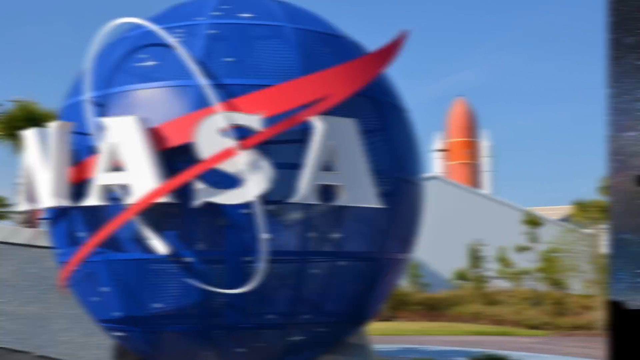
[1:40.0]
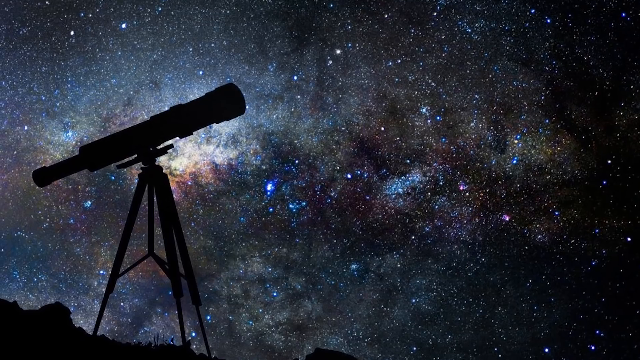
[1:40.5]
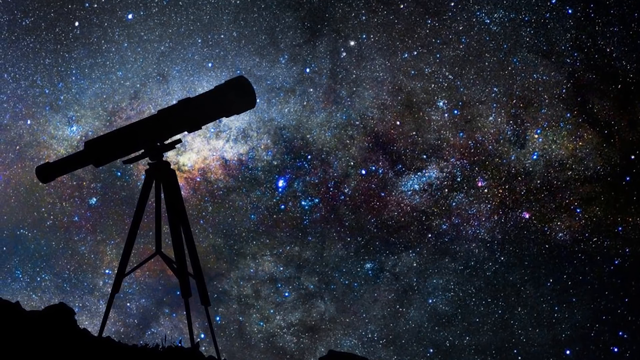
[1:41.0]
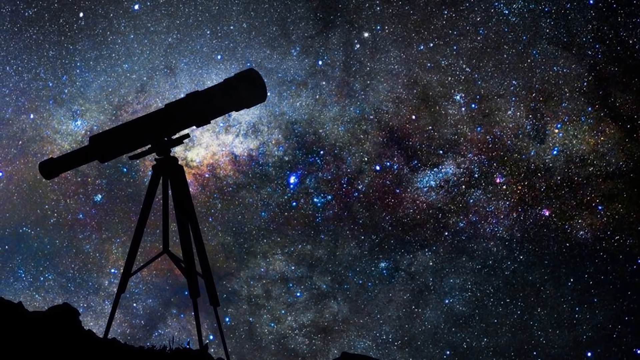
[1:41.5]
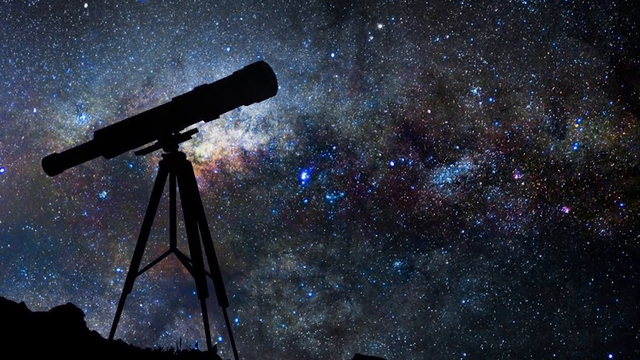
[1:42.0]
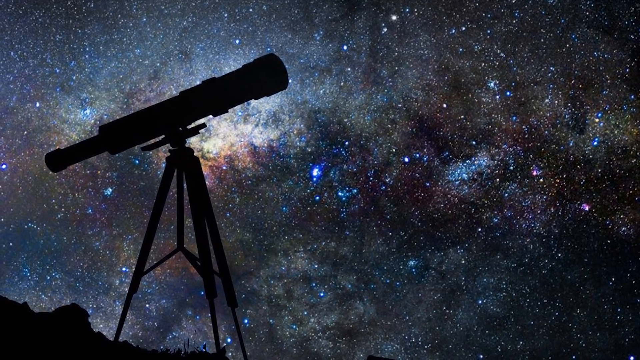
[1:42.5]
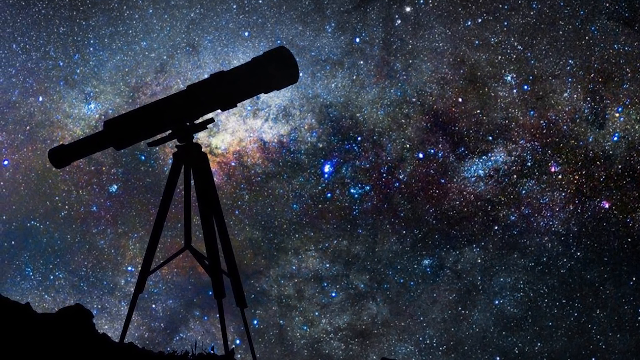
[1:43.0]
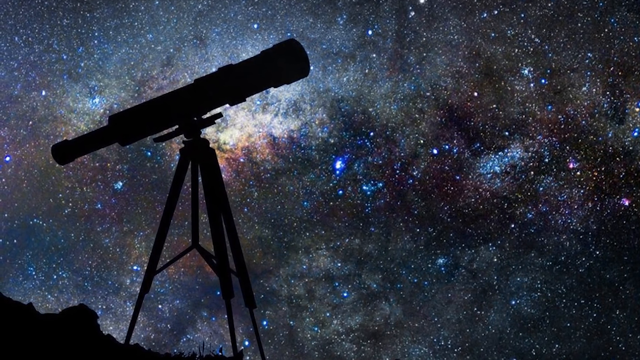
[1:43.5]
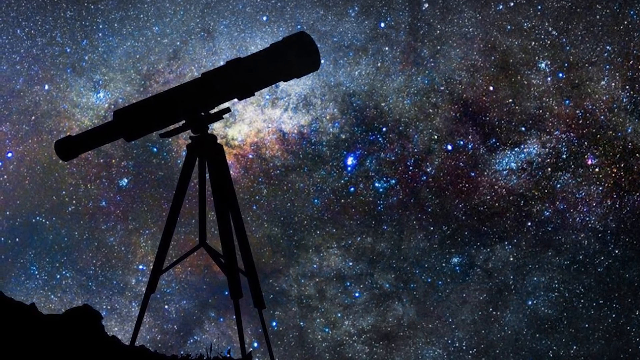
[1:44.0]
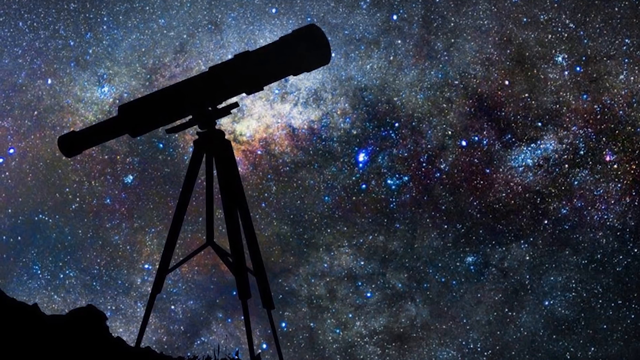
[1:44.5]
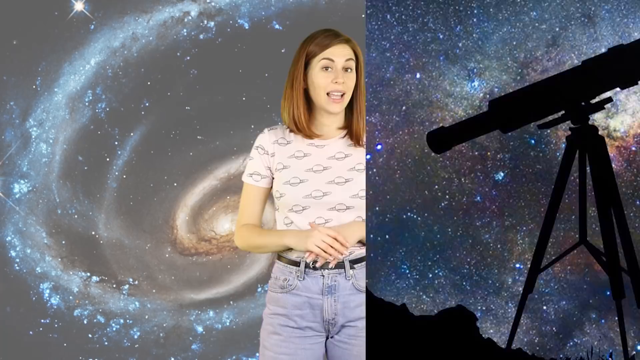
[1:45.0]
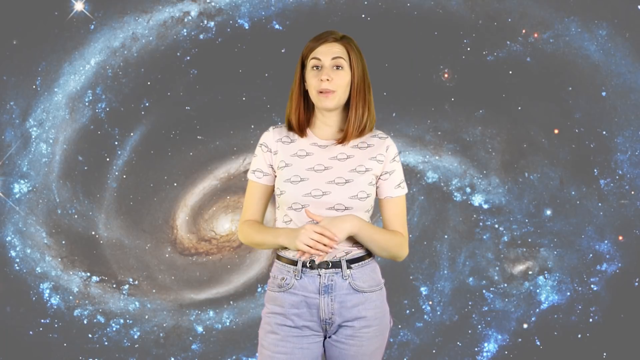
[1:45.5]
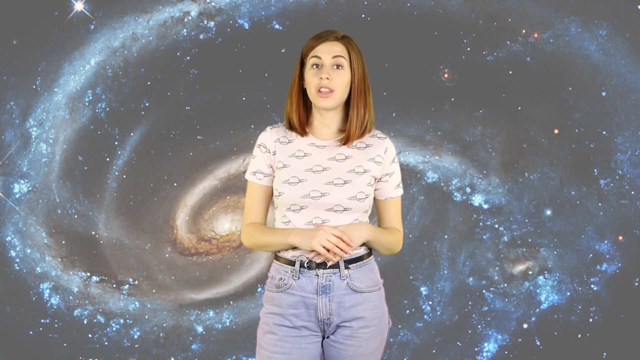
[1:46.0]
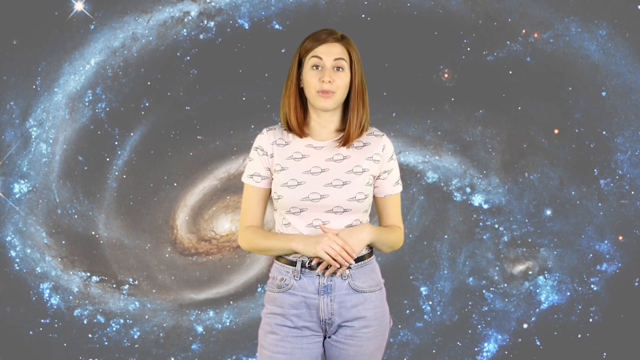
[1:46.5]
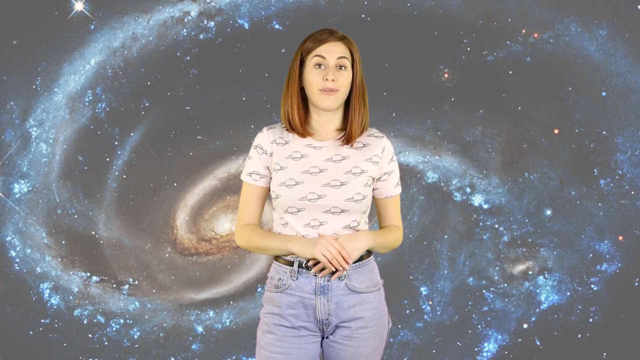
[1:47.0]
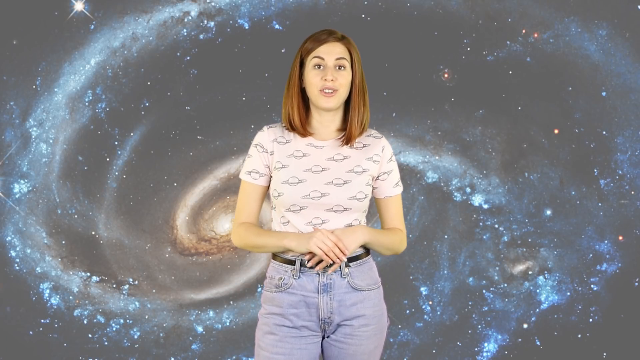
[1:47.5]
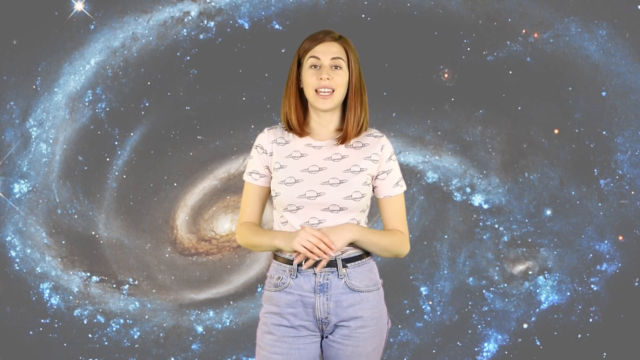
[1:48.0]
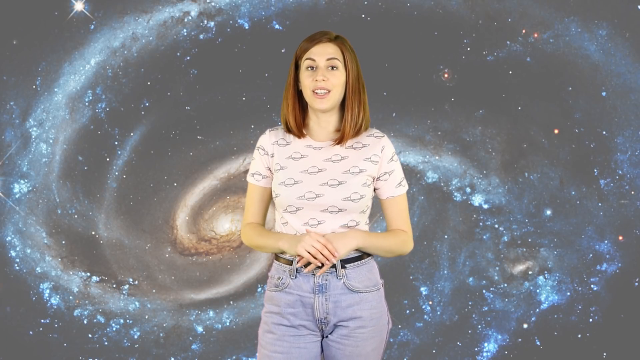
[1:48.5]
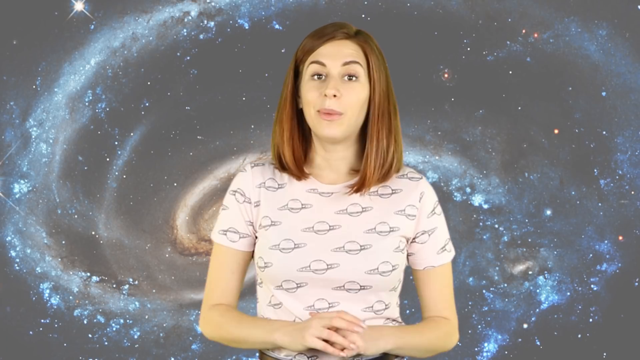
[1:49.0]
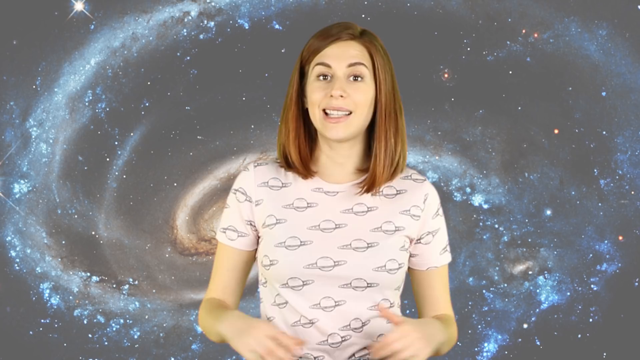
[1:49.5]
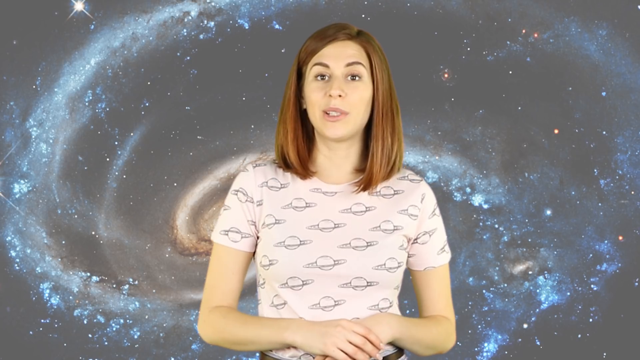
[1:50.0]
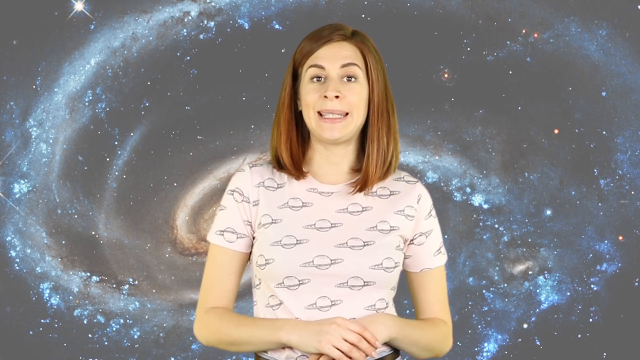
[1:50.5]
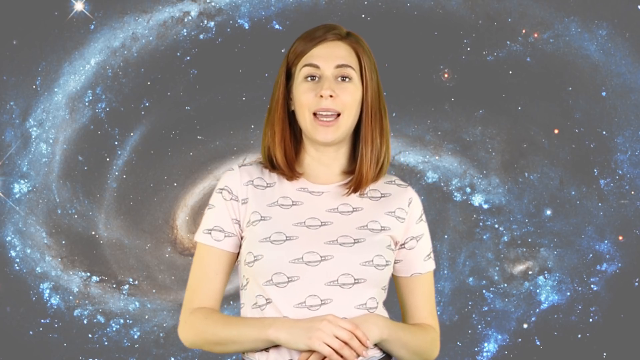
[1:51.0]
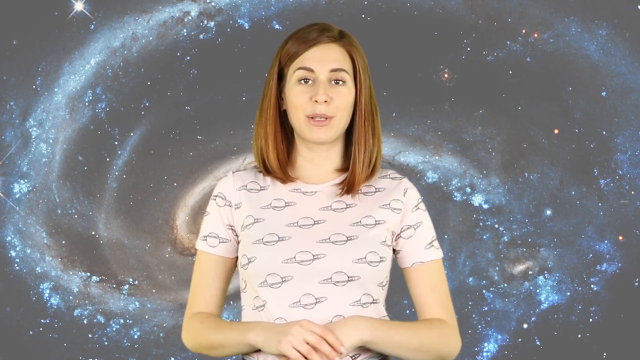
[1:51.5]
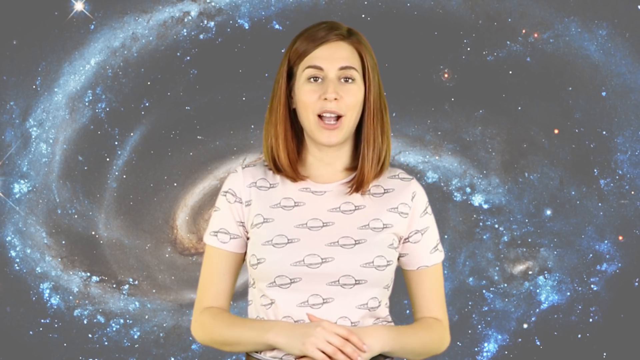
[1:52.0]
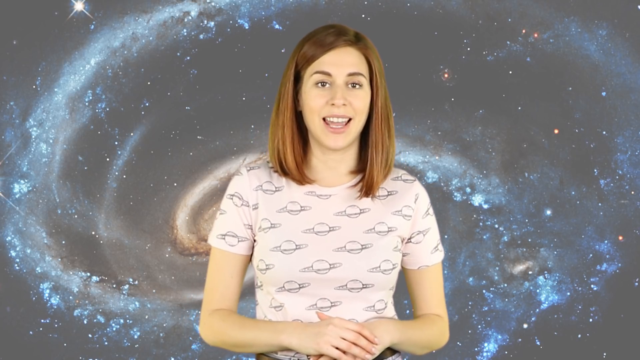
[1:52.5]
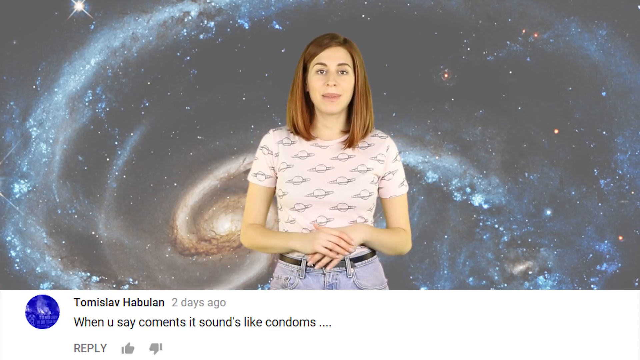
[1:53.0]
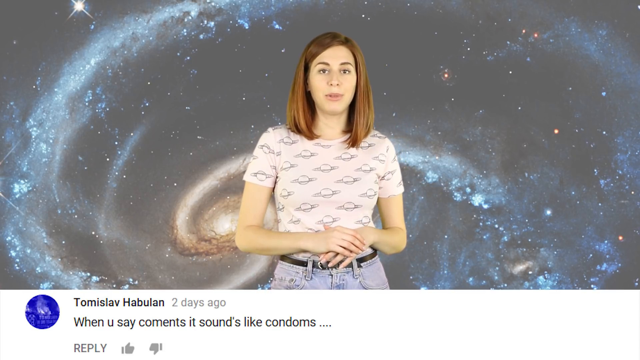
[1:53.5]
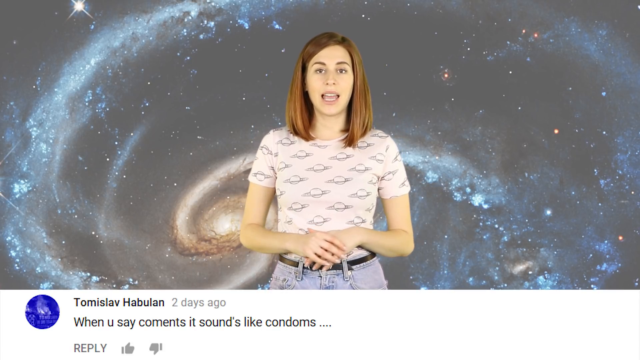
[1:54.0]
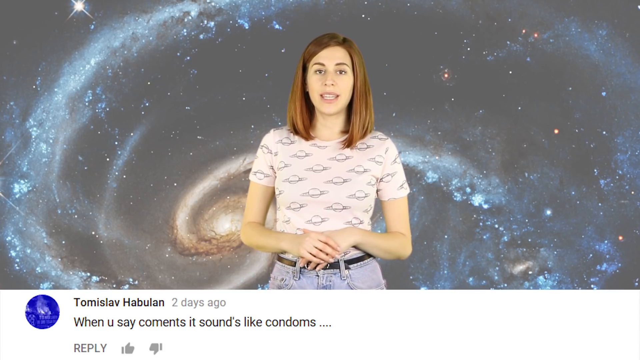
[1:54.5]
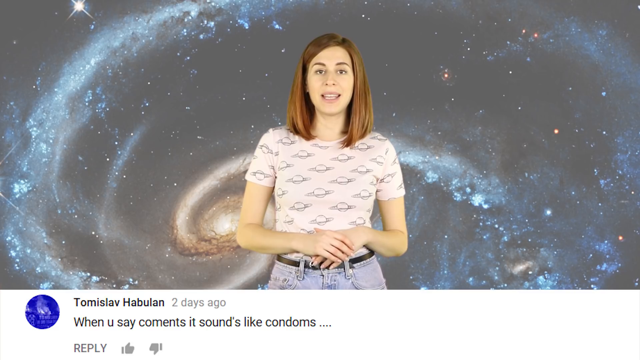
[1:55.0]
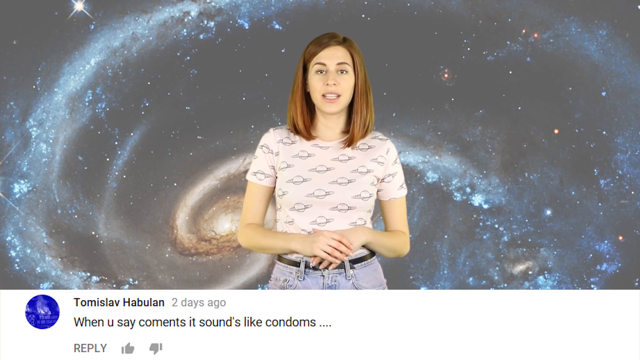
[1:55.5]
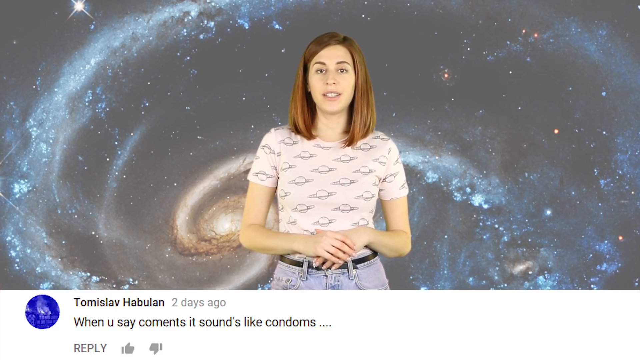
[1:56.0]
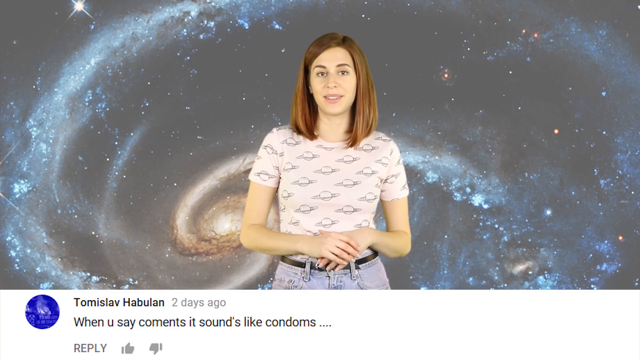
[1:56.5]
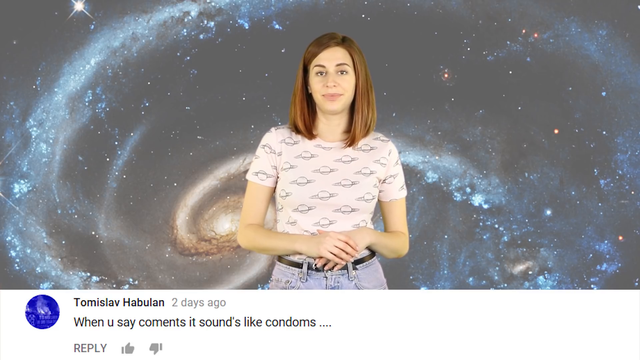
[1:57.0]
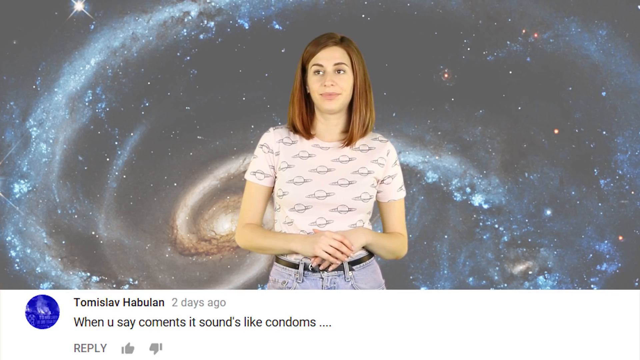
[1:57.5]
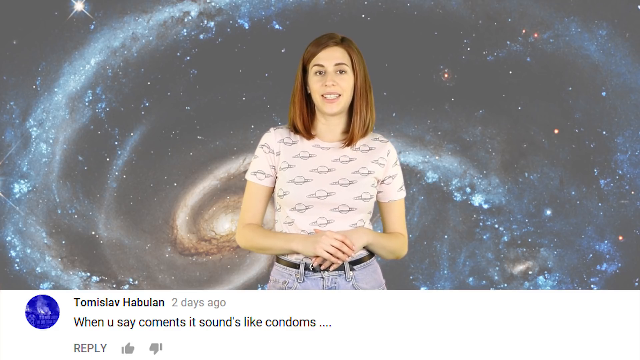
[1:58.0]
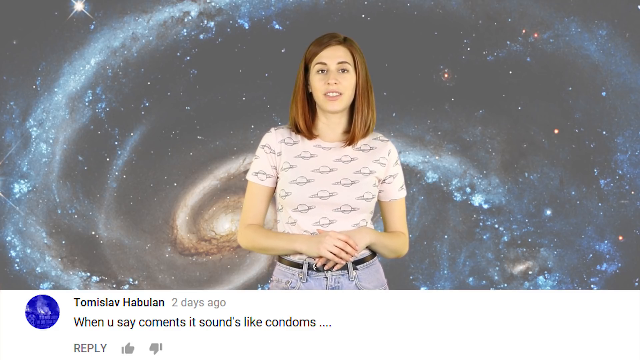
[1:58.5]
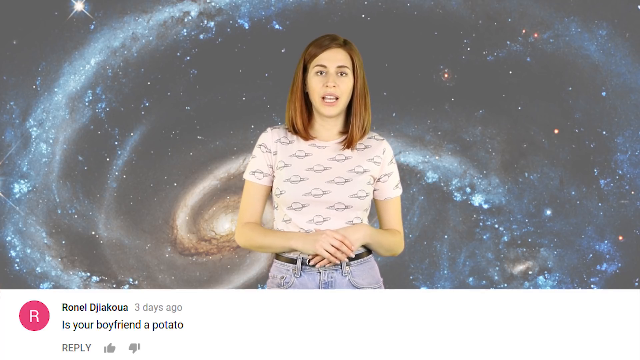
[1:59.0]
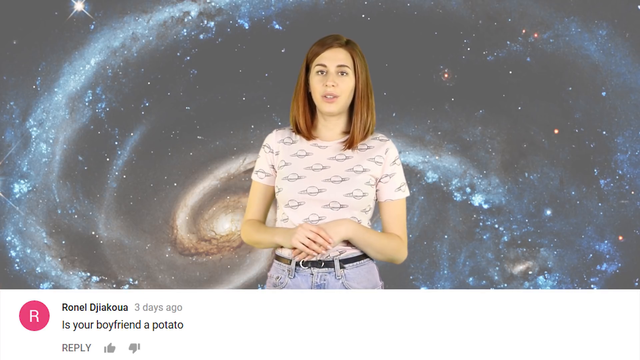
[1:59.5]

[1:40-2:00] A silhouette image of a telescope on a tripod is on the left side, pointing toward the upper right area of the sky, with outer space and a bunch of stars in the background. The view zooms in on the silhouette of the telescope. The same woman stands in the middle, looking at the viewer with her hands together while talking. Behind her is the faded, light image of a swirling galaxy, similar to the Milky Way. The view zooms in closer; her hands are together and her elbows are bent. The view zooms out, and words from a social media post appear at the bottom: "when you say comments, it sounds like condoms", posted two days ago. Another comment by another user follows: "Is your boyfriend a potato?", posted three days ago.